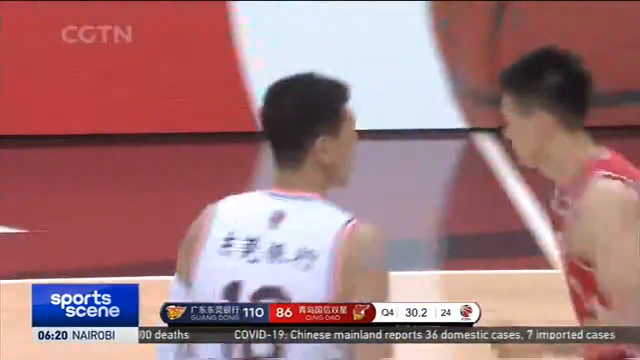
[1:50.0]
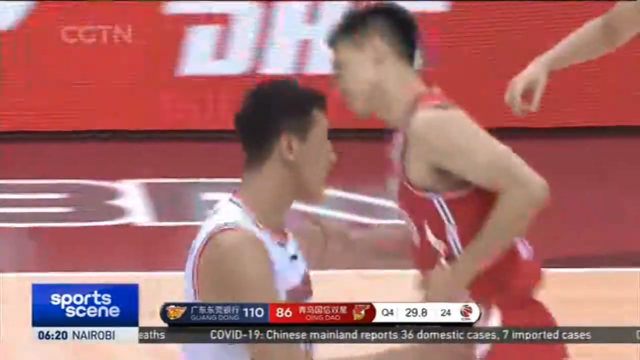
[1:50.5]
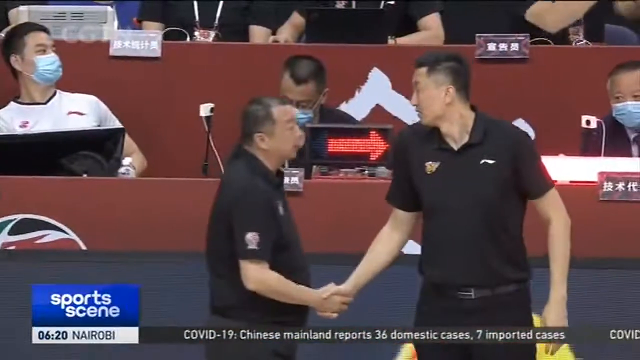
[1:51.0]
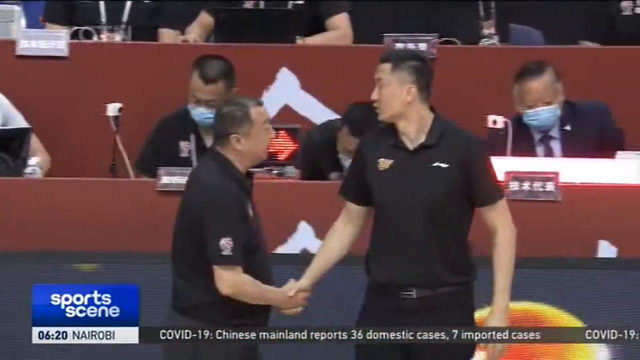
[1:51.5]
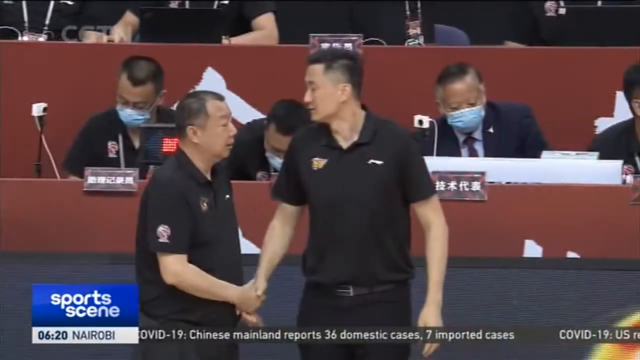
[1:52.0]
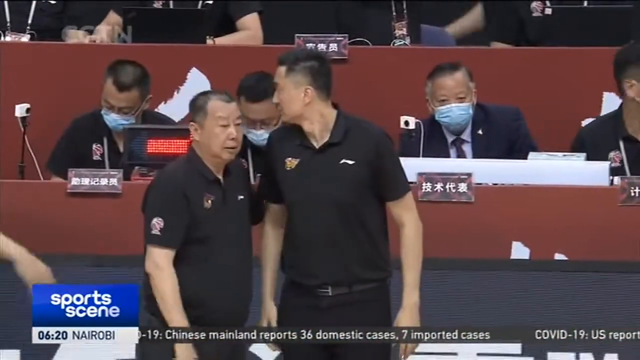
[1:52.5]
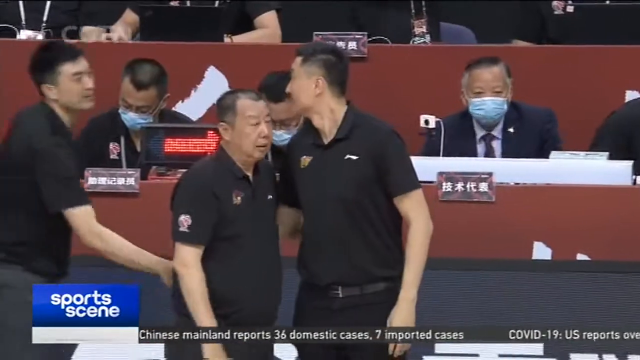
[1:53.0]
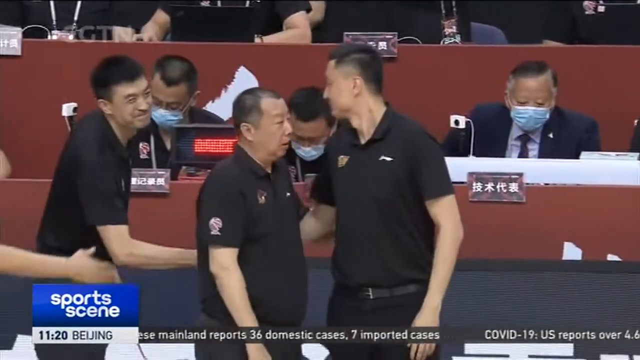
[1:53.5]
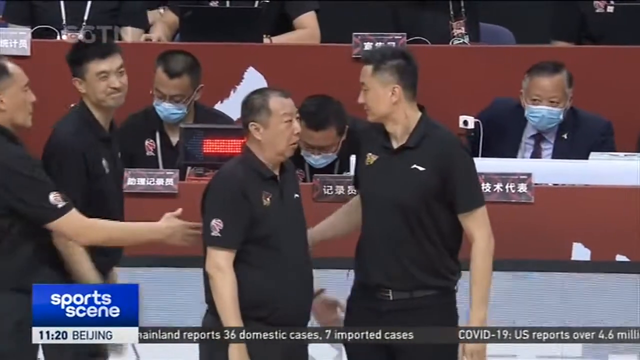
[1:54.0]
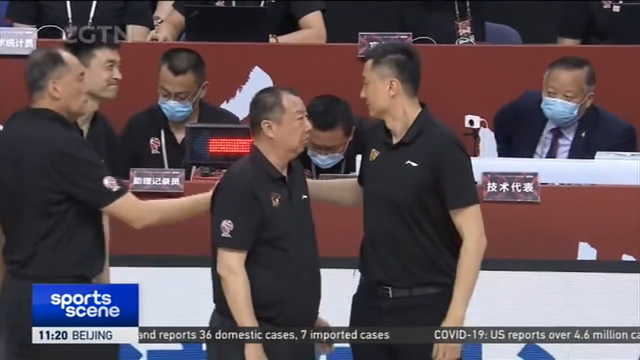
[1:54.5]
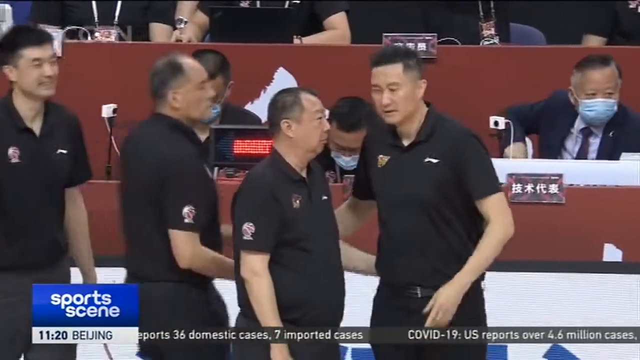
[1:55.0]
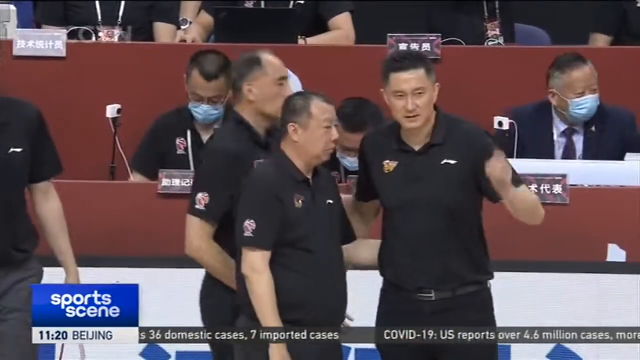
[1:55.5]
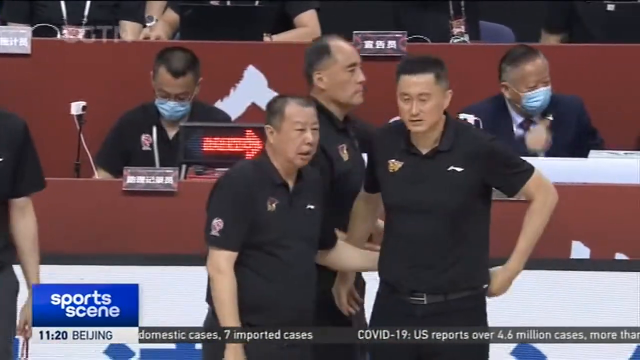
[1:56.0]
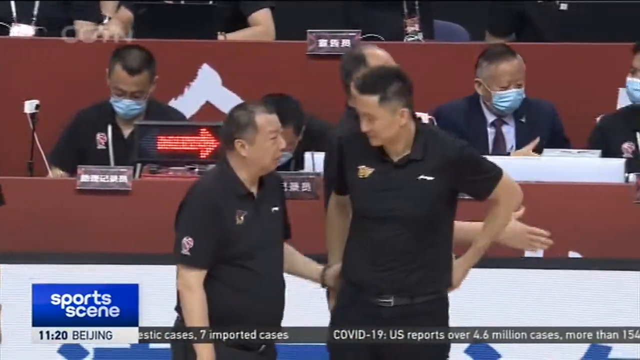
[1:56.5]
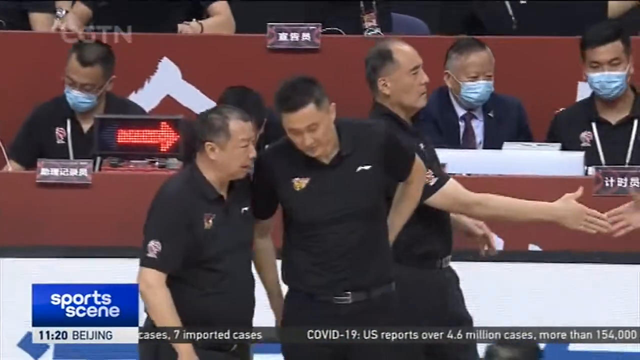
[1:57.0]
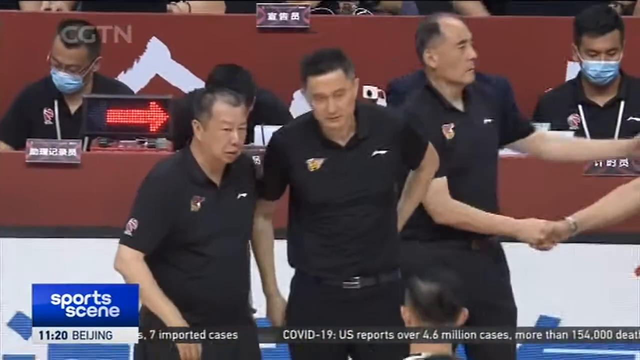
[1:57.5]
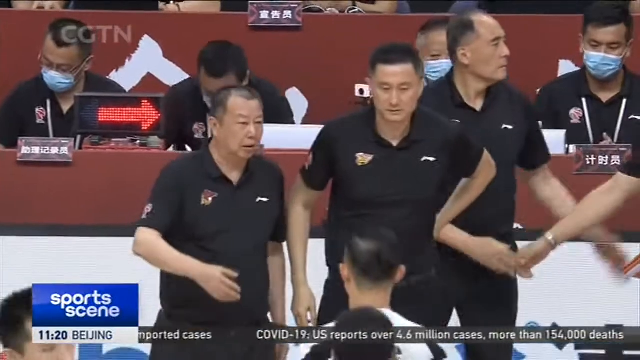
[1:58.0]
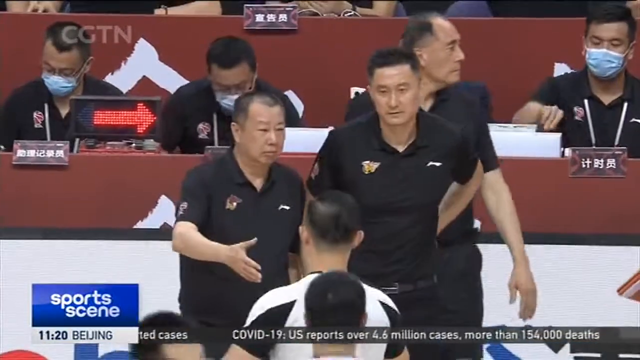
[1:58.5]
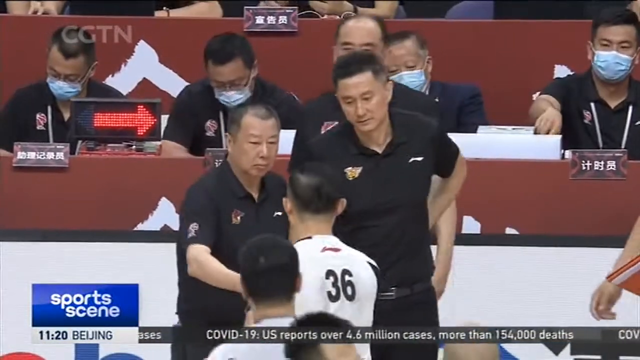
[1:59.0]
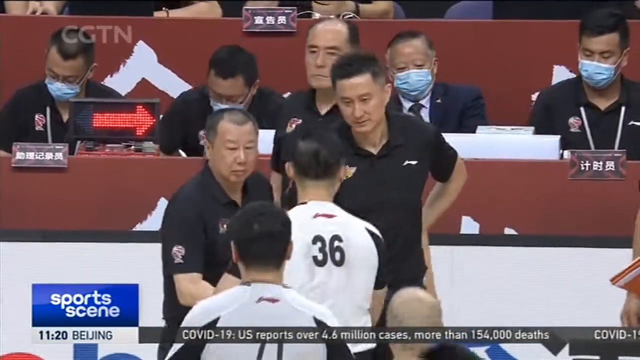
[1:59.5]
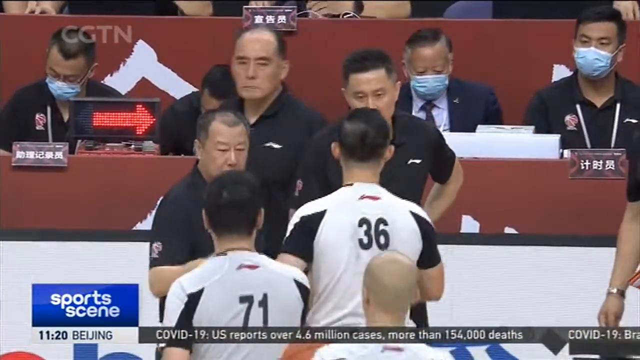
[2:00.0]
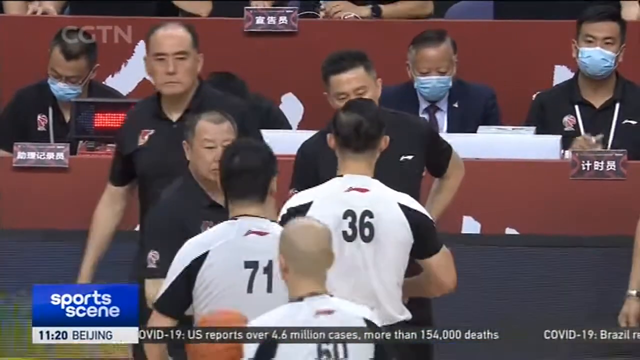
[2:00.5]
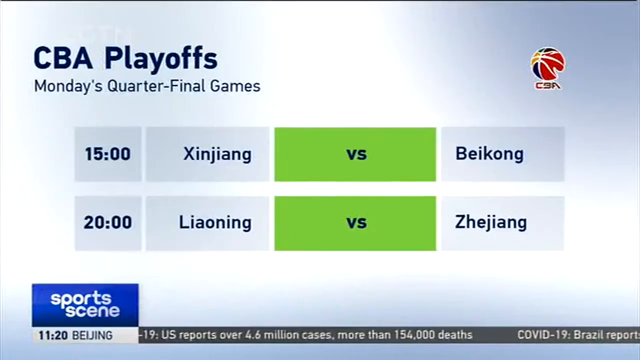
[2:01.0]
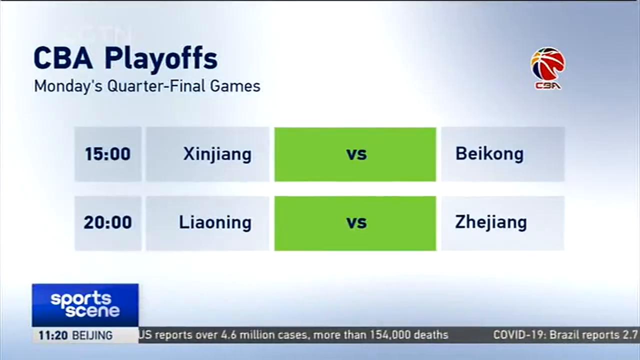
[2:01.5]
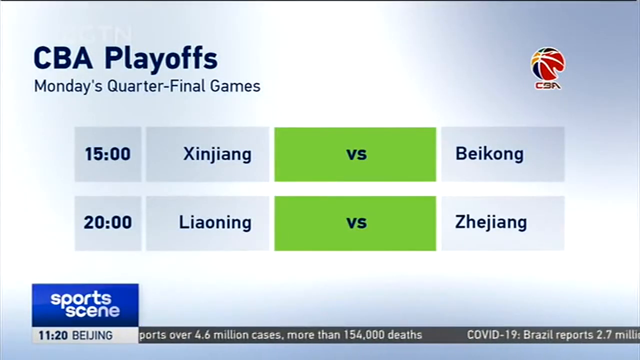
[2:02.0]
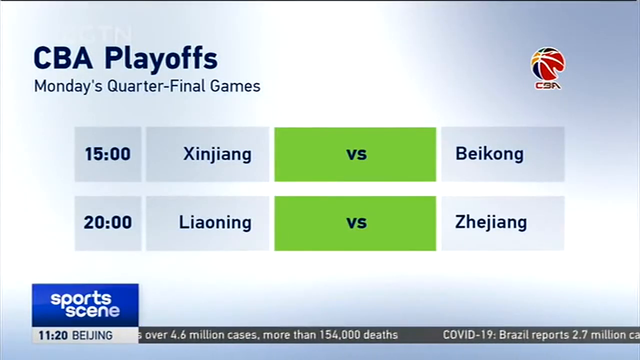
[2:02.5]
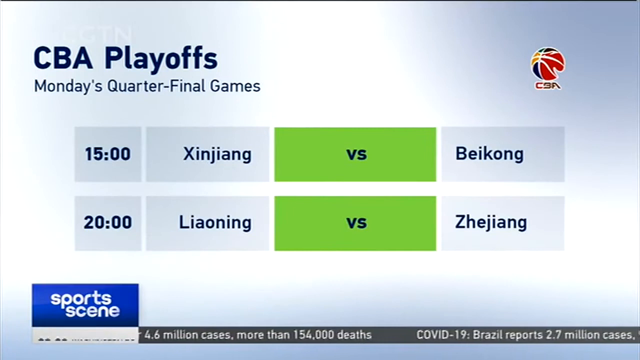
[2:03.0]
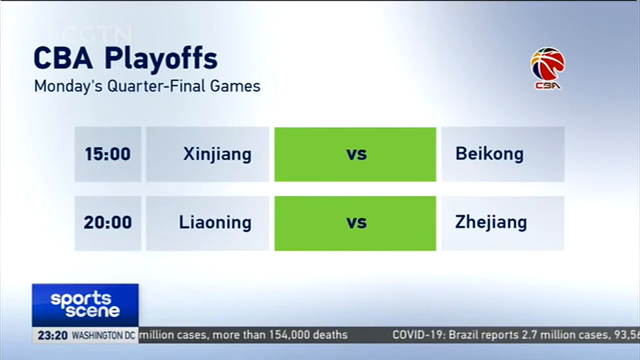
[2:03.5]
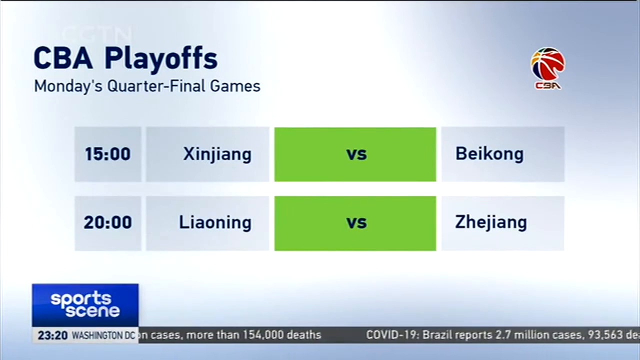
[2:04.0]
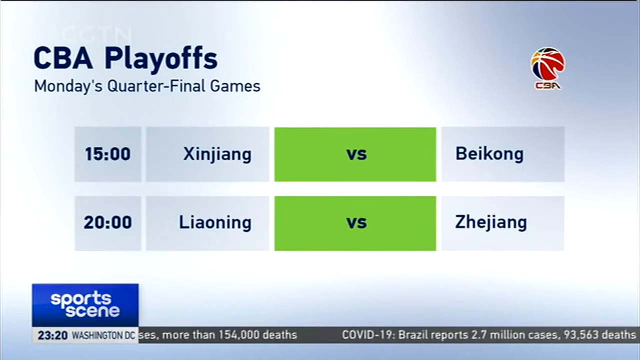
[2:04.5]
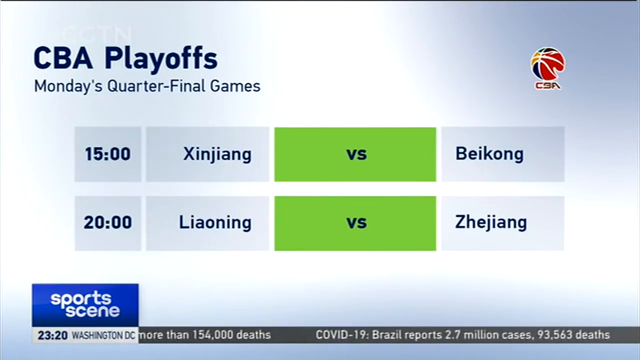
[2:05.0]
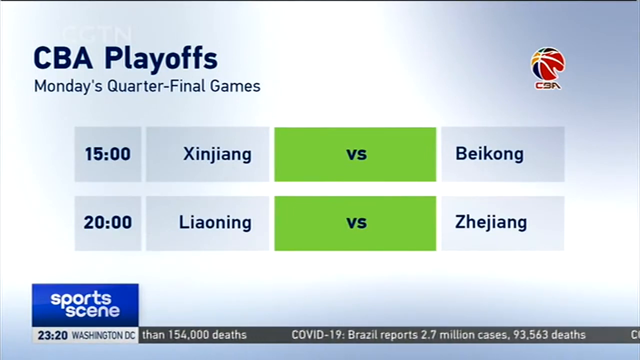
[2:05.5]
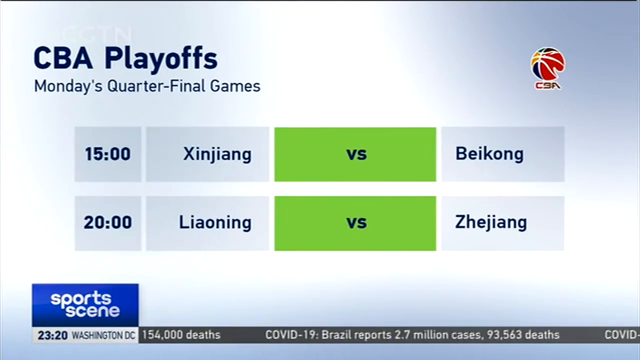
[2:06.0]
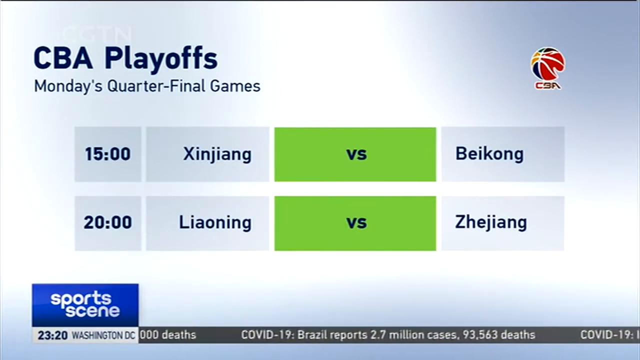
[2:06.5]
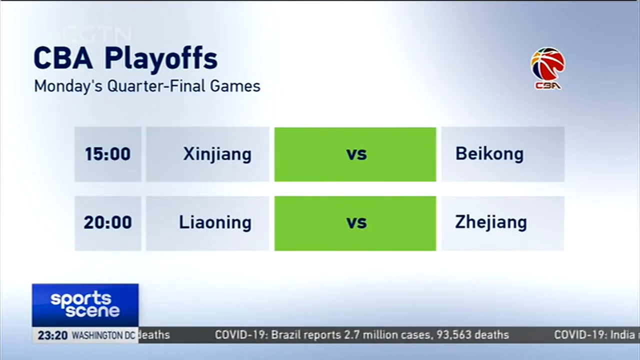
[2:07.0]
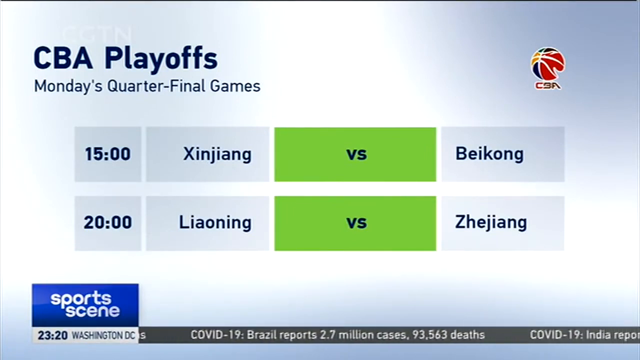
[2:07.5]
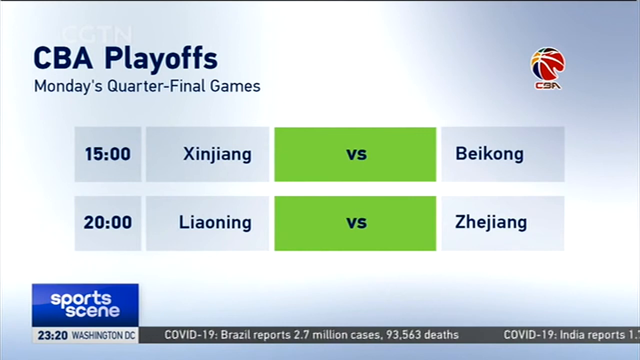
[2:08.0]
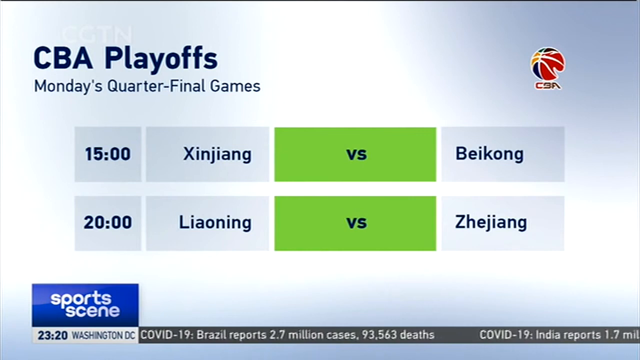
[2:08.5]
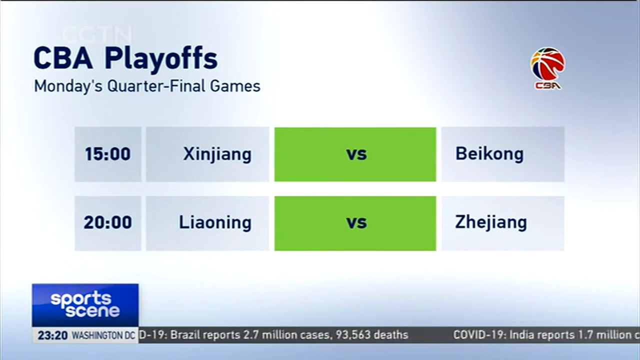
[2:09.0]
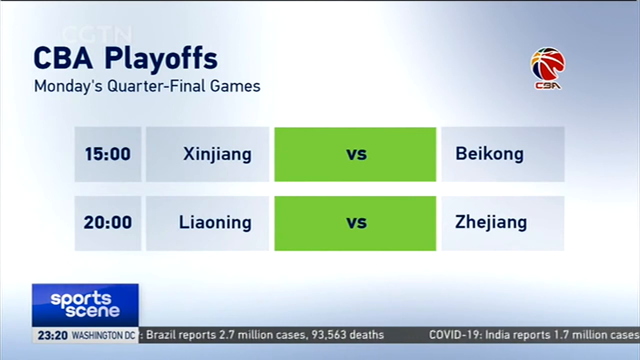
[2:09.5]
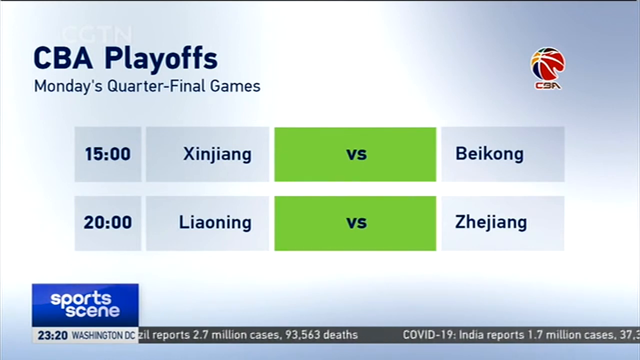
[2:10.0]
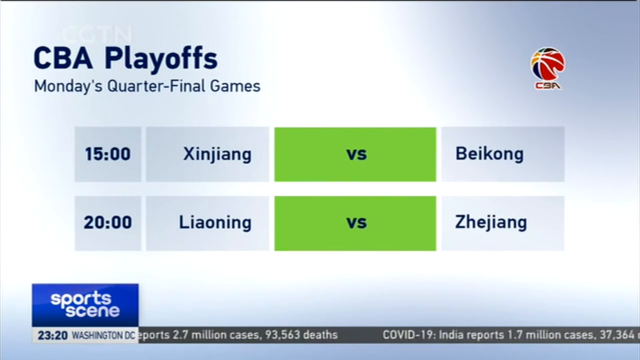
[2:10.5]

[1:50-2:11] People shake hands, apparently members of the same team; the head coach shakes hands with the other coaches. They wear simple polo shirts tucked into black pants, with a white emblem on the left chest and another emblem on the other side. At a table, people wear blue masks with strings around their ears. A possession arrow is on the right. The coaches line up as the white team comes up, and they shake hands. A "CBA playoffs" graphic then shows the next two opponents with times in military time, 1500 and 2000 hours, over a background that shifts from whitish to light blue to white. A red, blue and yellow CBA logo is toward the top right with "CBA" underneath it. "Sports Scene" remains in the bottom left, along with the time in different parts of the world and COVID-19 reports and deaths.